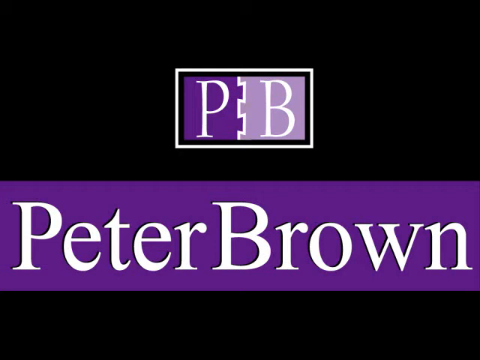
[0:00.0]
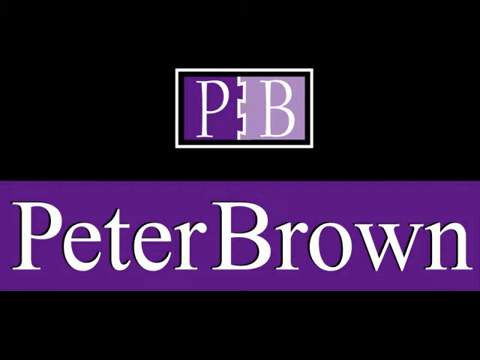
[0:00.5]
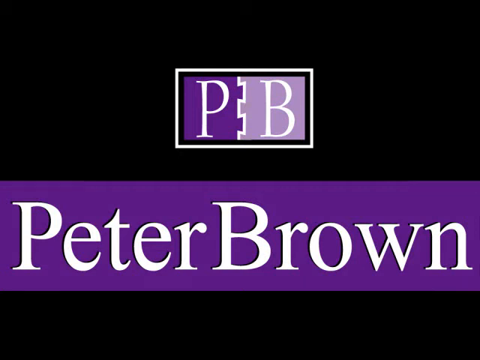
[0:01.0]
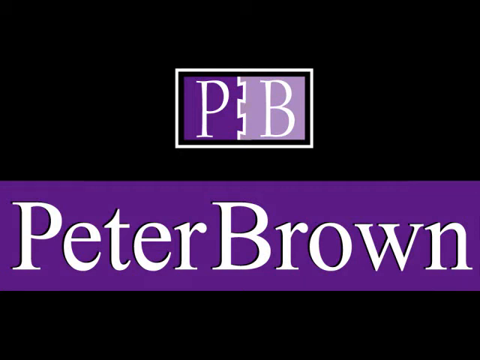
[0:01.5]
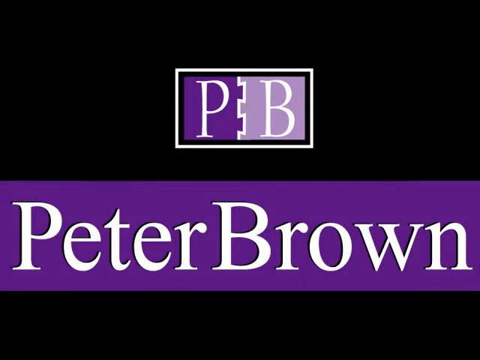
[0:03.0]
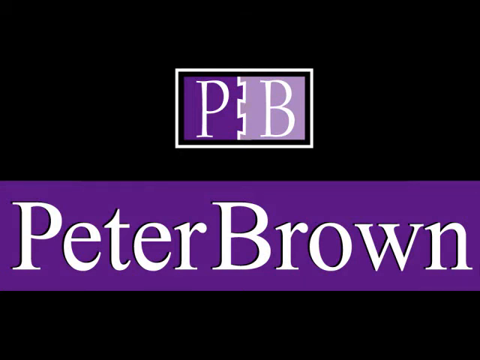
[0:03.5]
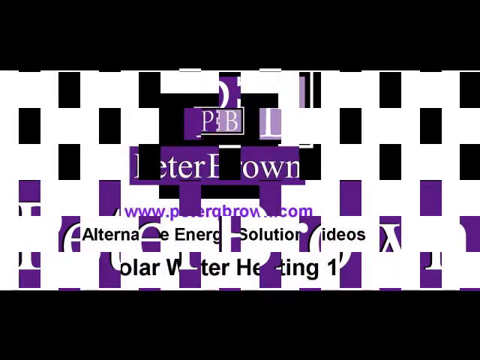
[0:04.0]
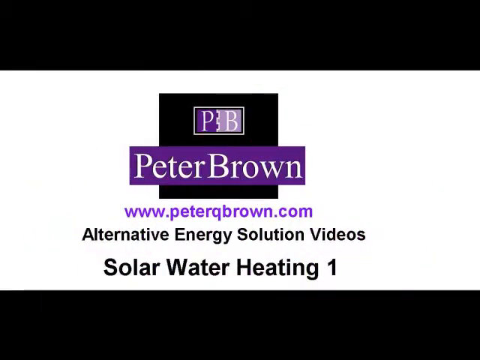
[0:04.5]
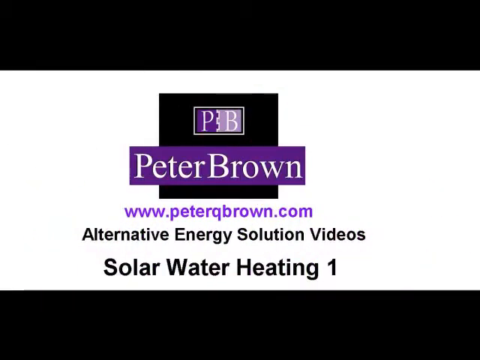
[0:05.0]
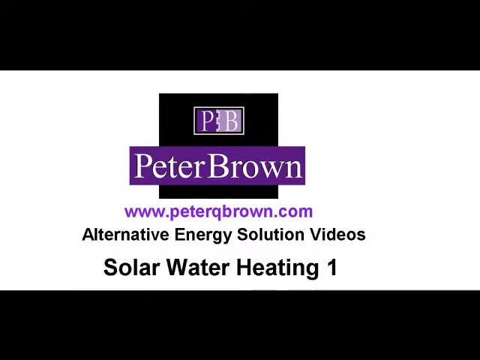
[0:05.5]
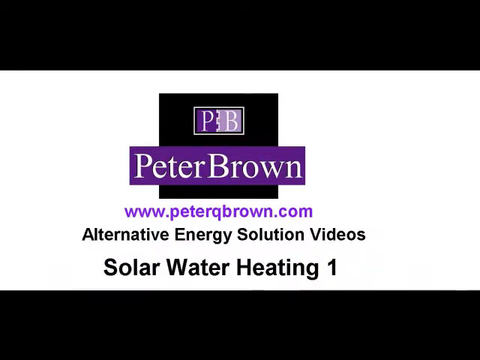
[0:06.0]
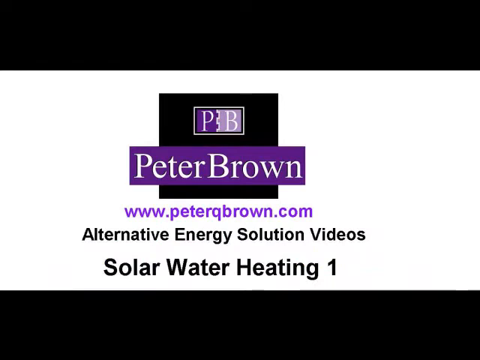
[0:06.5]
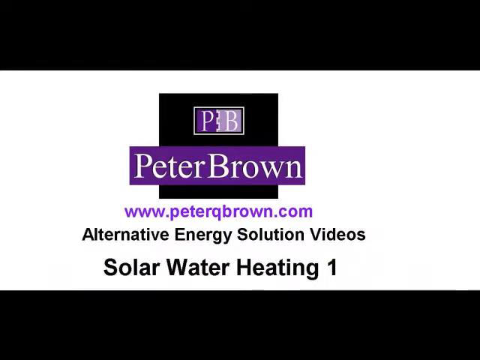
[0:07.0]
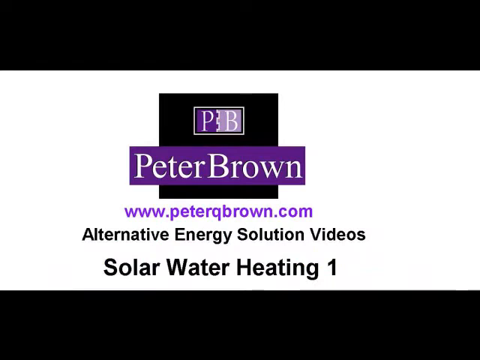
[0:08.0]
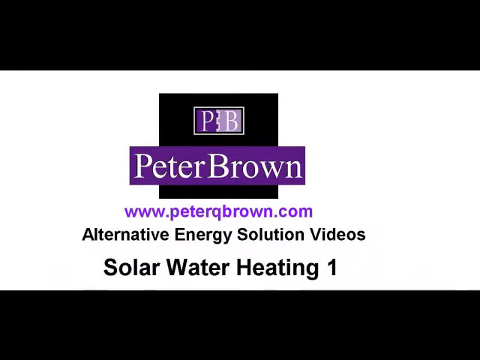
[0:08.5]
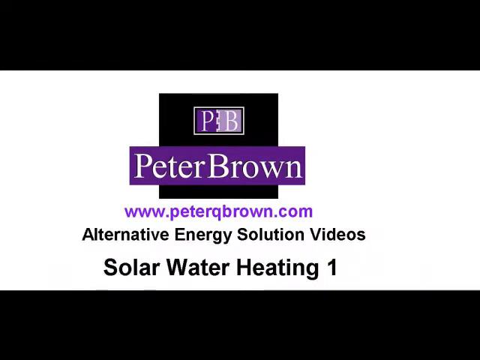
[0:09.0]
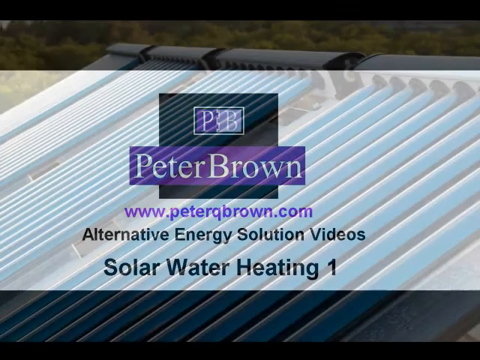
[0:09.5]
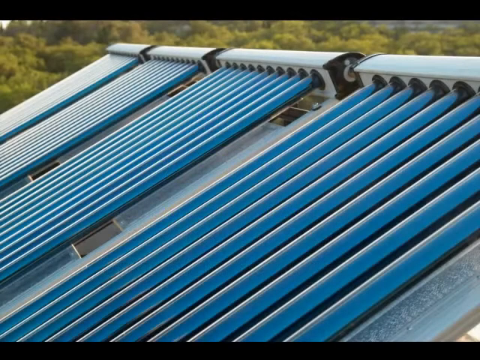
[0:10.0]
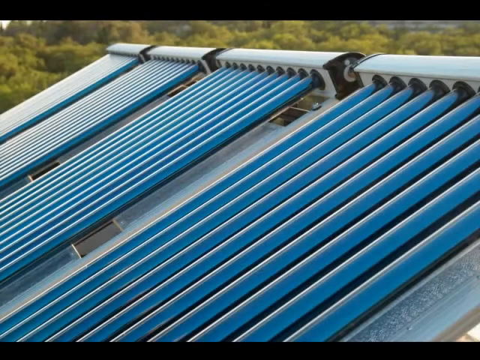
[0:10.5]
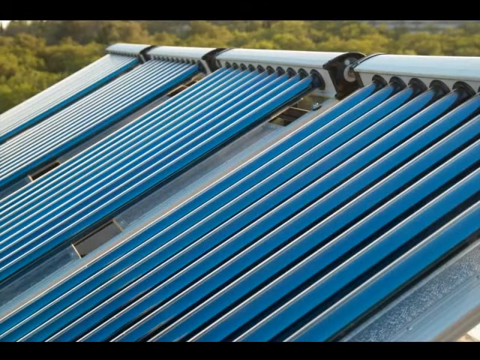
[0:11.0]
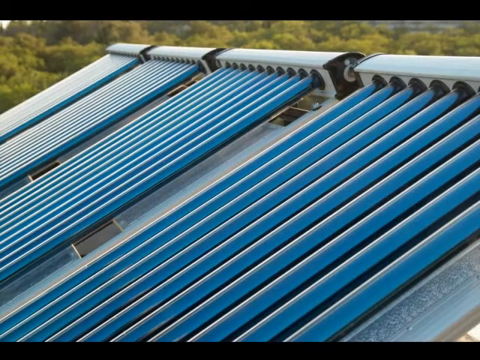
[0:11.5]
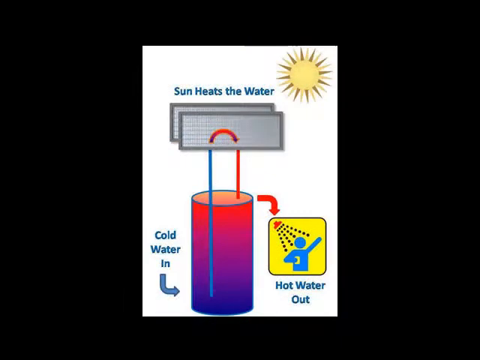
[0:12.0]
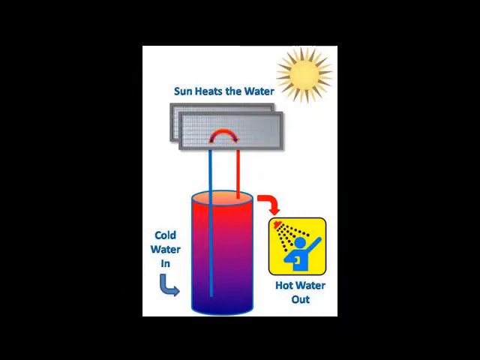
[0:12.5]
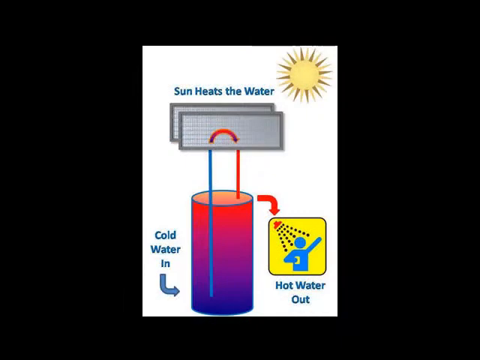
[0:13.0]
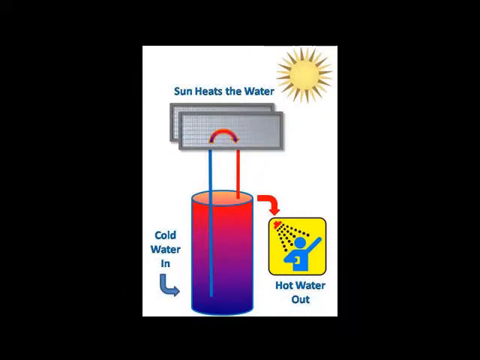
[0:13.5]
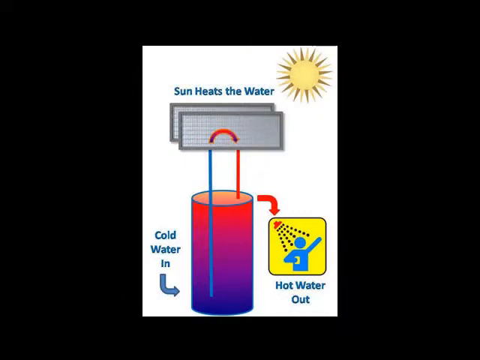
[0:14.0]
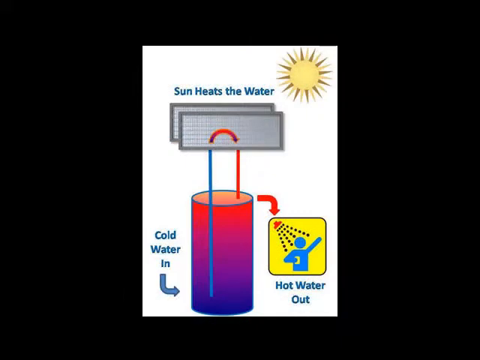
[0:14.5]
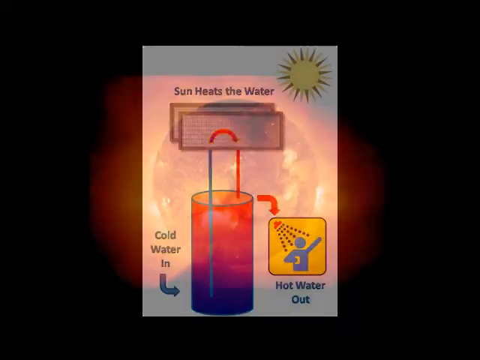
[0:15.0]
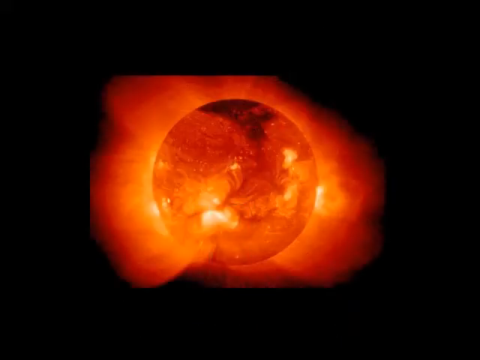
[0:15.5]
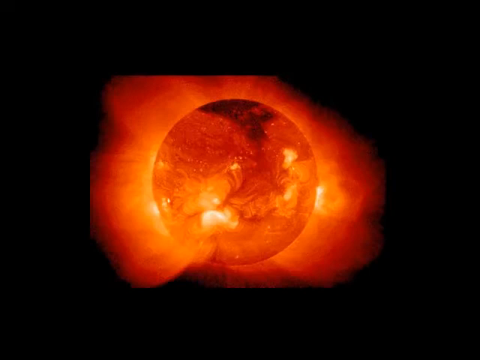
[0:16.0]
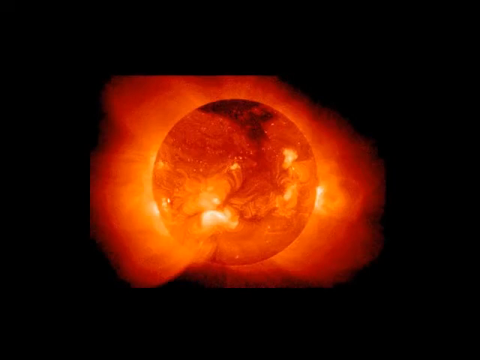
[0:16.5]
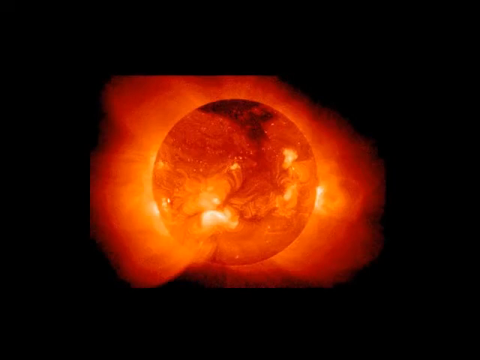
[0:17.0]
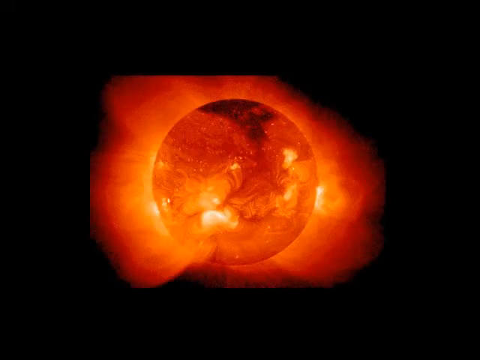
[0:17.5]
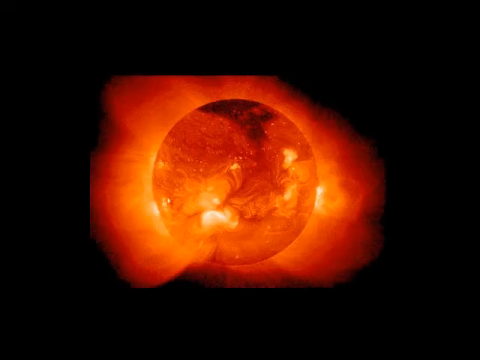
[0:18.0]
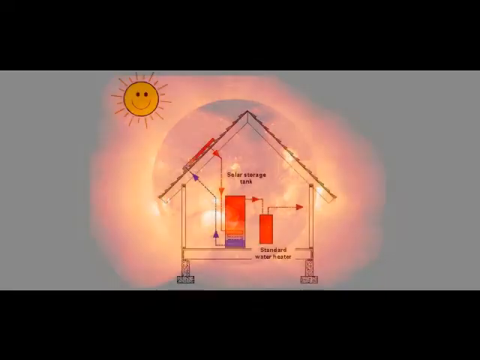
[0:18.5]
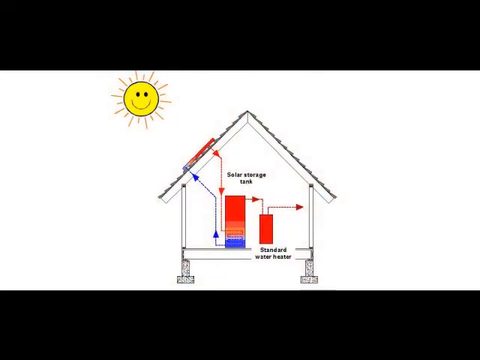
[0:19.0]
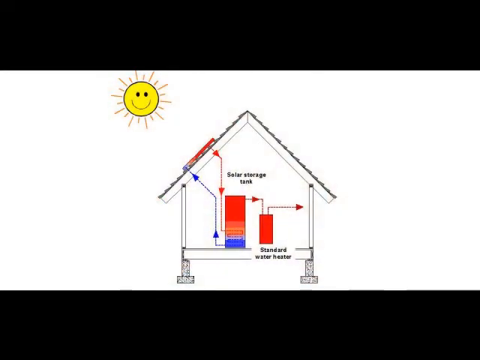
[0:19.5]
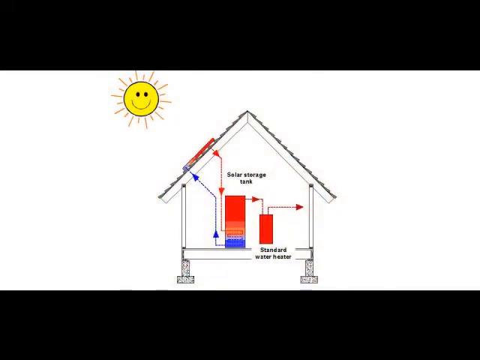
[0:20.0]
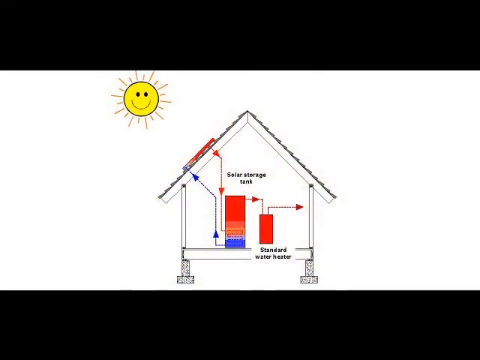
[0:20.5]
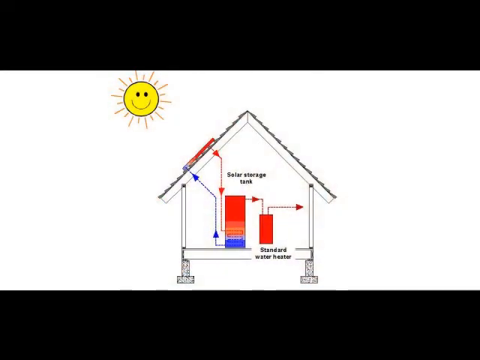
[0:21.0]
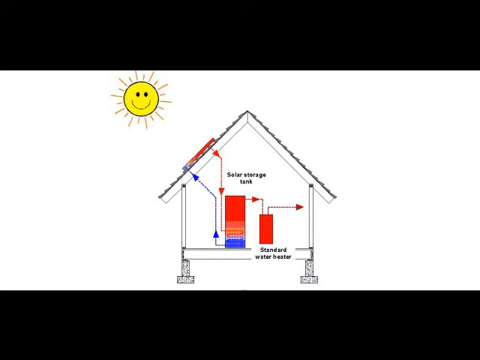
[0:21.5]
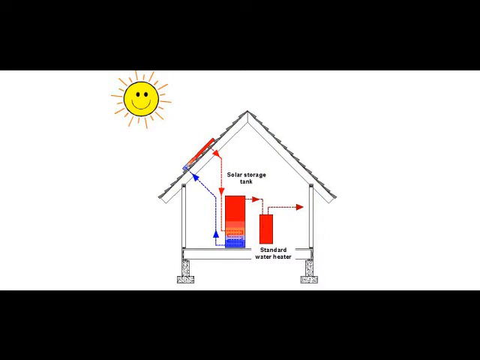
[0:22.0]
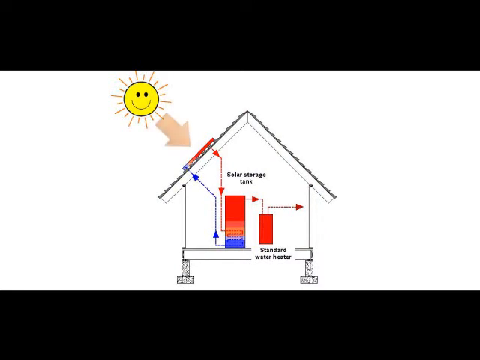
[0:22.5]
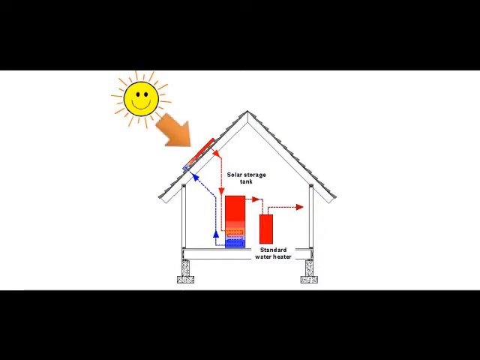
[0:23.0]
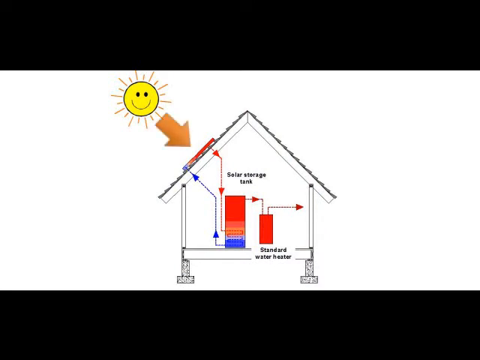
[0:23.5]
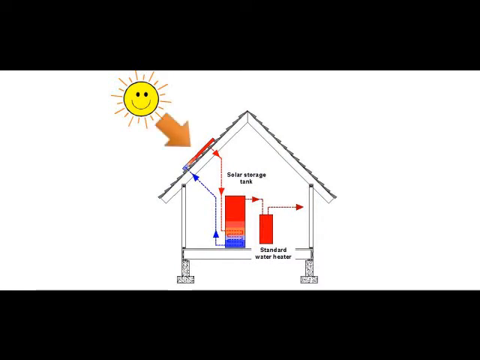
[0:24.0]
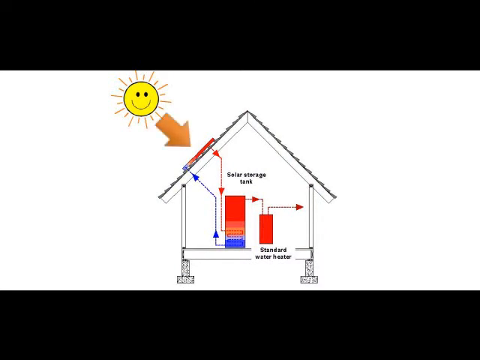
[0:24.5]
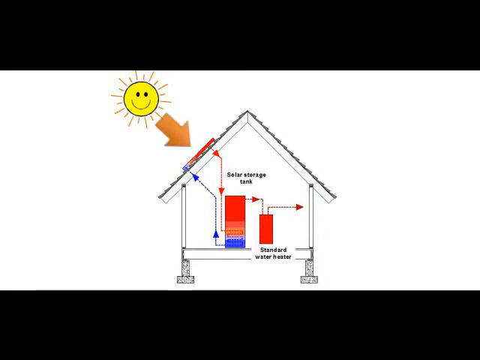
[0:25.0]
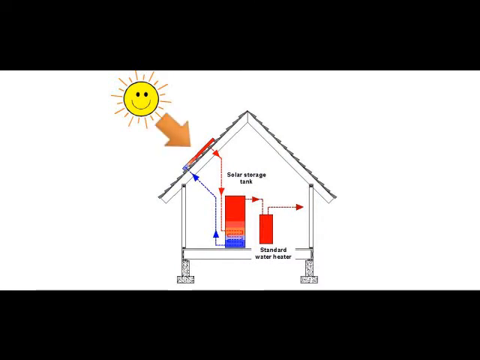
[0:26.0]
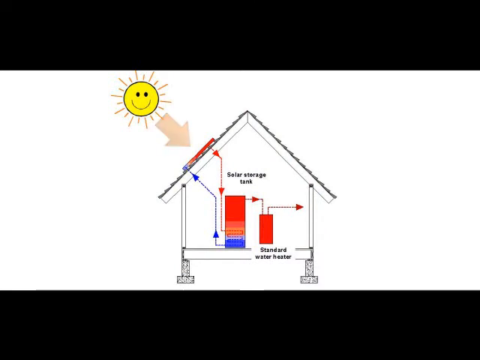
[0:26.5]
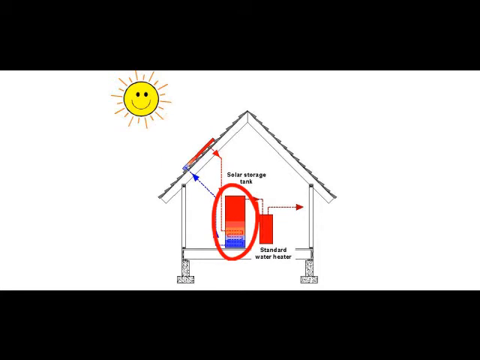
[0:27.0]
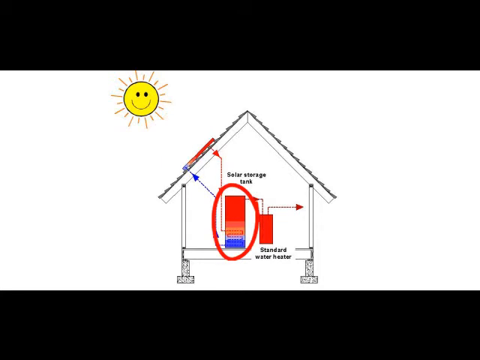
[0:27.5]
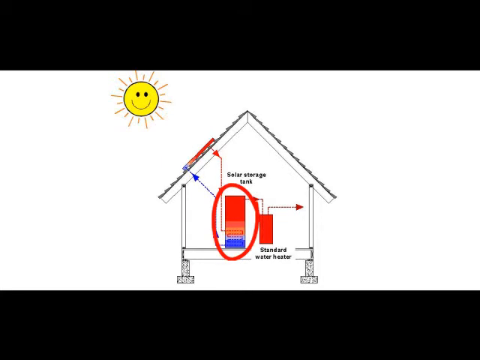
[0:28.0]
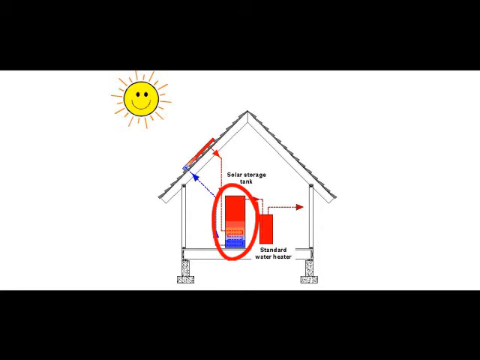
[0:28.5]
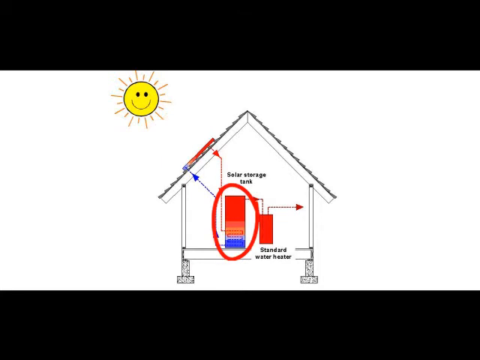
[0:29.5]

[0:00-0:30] The video opens on a black screen with a purple box reading "Peter Brown" in white letters. Above it is a smaller box, half dark purple and half light purple; the dark purple half has a P and the light purple half has a B, and the two slot together in a kind of jigsaw puzzle formation. The next screen has a black background with a white box showing the Peter Brown logo and title. Below this, in purple lettering, is "www.peterqbrown.com", and below that, in black lettering, "Alternative energy solution videos solar water heating 1". Next, what seem to be solar panels are attached to the roof of a building. Then comes a diagram, apparently computer generated, with a sun in the top right corner and the text "Sun heats the water". Below are two sheets of what looks like solar panelling. Underneath is possibly a water tank, seemingly a red, purple and blue cylinder with a blue pipe coming out of it that curves and turns red as it passes through the panelling. Text reads "cold water in" with an arrow, then "hot water out" with an image of somebody in the shower. The next picture shows a planet, possibly the sun, with a red and orange haze over it, almost fire-like. Then a very basic diagram of a house appears, with a sun with a smiley face above it and solar panels on the roof. Arrows point from a cold water tank to the solar panels and back as red arrows indicating hot water. The water then goes from the water tank into a smaller container labeled "standard water heater". An arrow appears between the sun and the solar panels, pointing at the panels, and the water tank is circled in red.